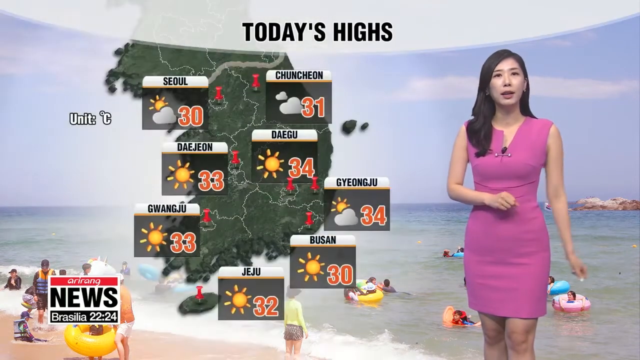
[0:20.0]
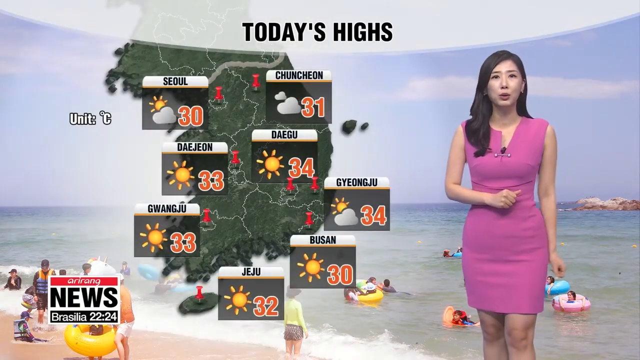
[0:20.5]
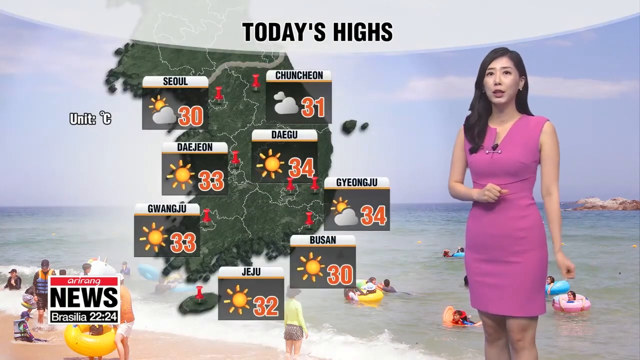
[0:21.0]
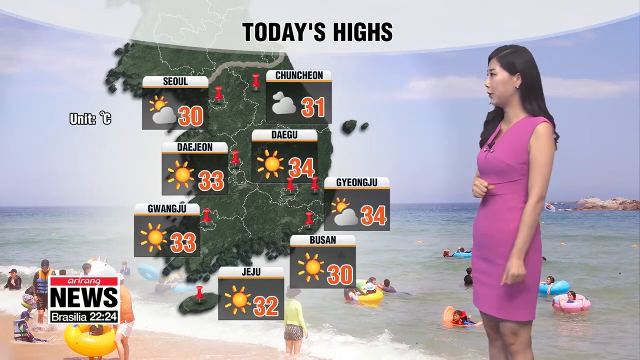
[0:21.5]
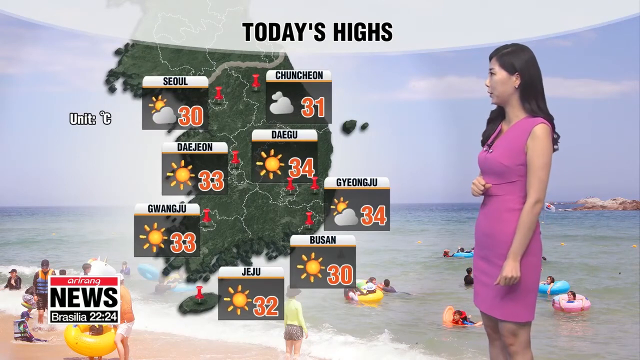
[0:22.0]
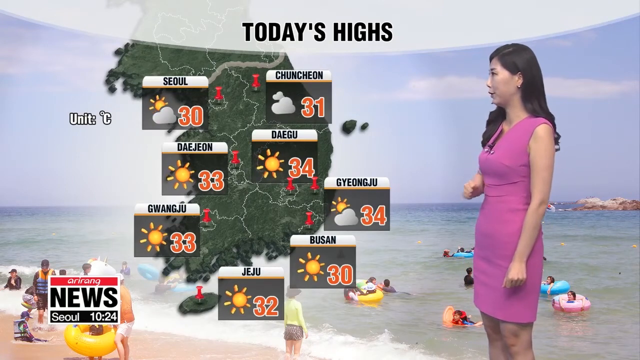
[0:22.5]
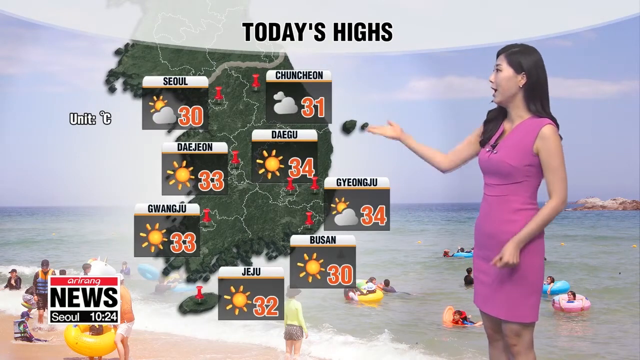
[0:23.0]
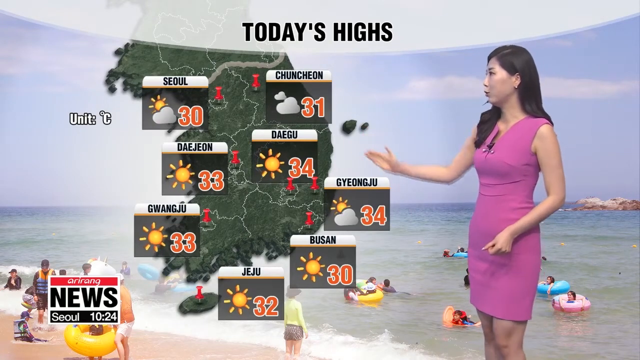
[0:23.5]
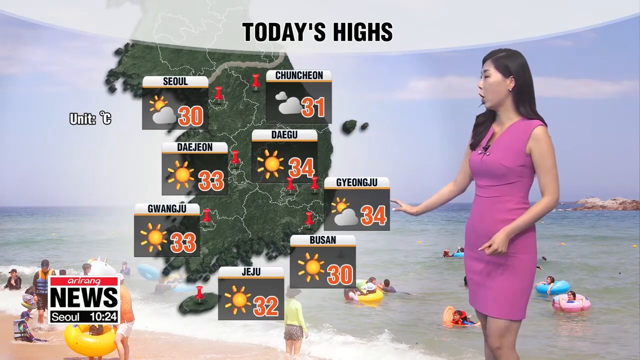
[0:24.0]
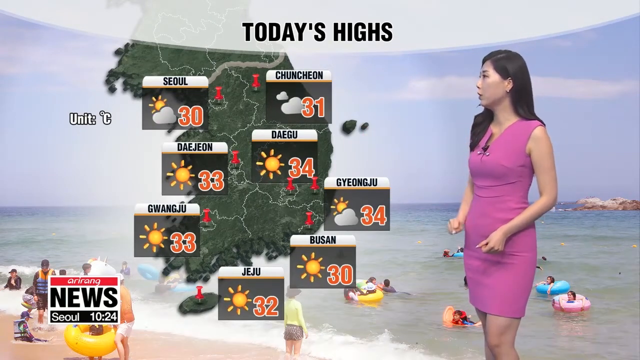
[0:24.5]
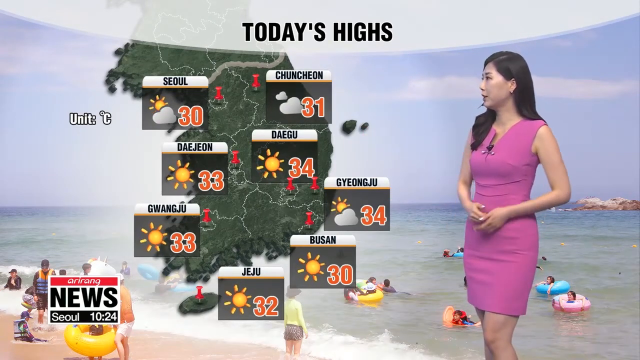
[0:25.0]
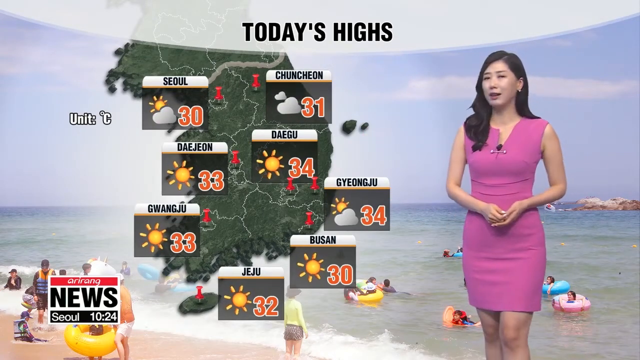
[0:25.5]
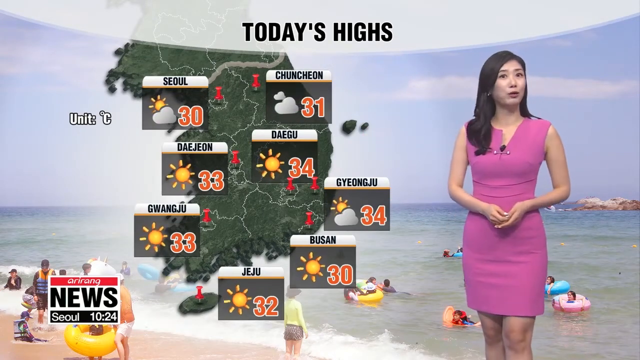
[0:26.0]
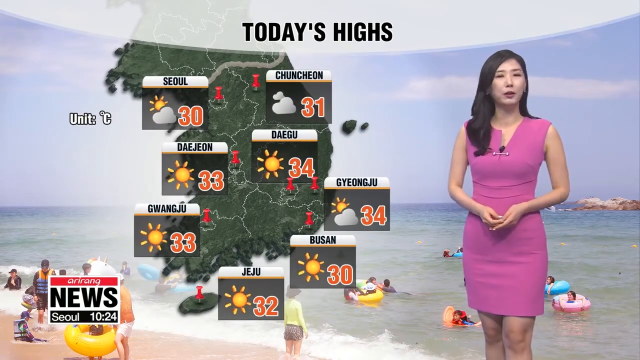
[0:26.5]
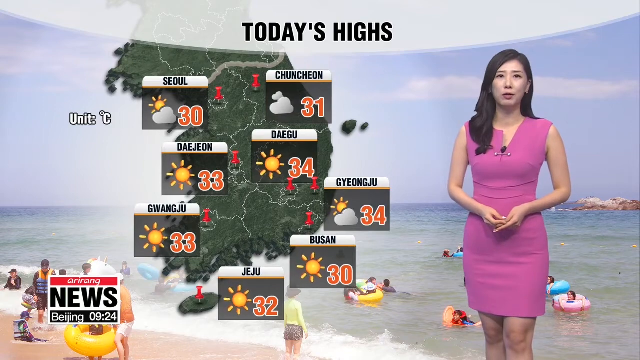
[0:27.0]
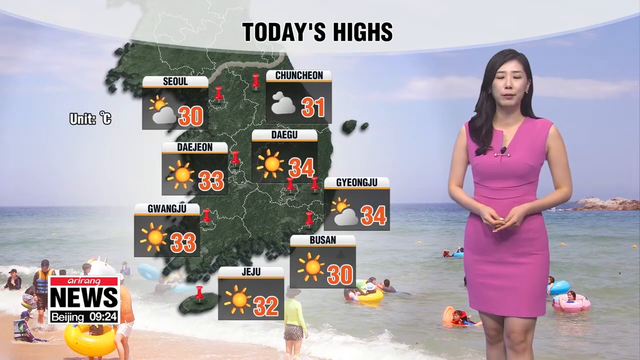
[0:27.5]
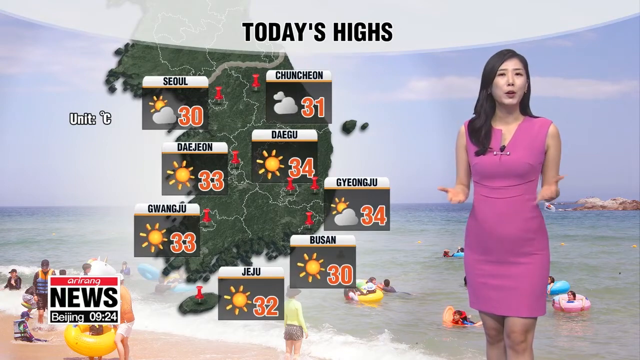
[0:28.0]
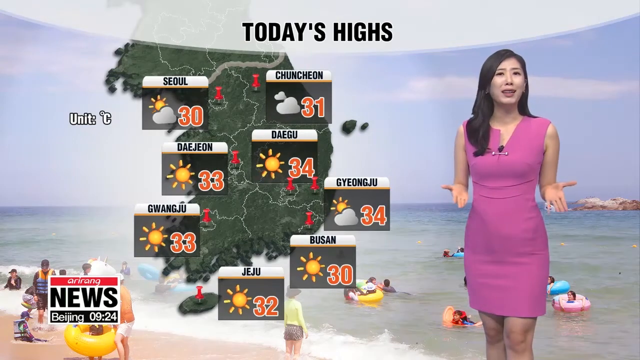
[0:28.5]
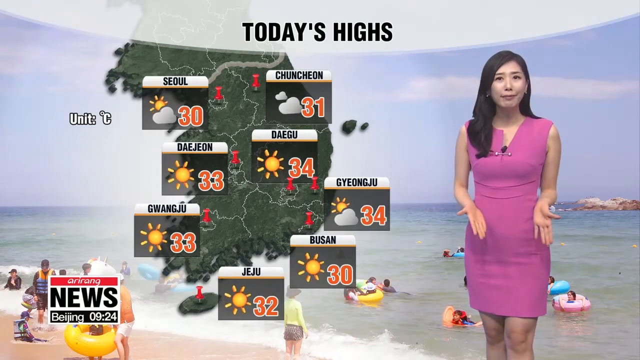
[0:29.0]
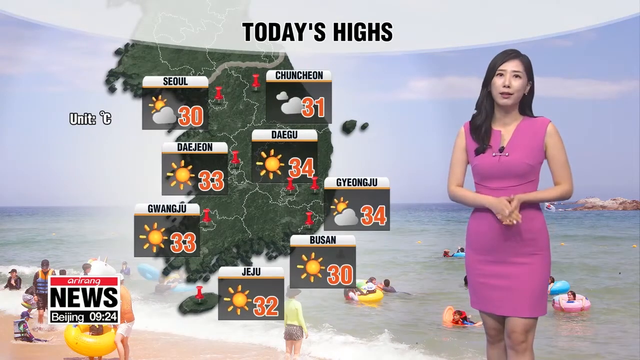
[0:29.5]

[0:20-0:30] A white woman with long black hair wears a pink dress with a mic attached to it. She stands in front of a screen. In the background, people at a beach appear to be swimming; some are walking, and some are swimming with life jackets. The screen shows different places and their temperatures, with the unit in degrees Celsius. A news logo in the bottom left corner of the screen identifies this as a news channel. The woman points to the screen with her right hand and actively uses hand gestures as she communicates.